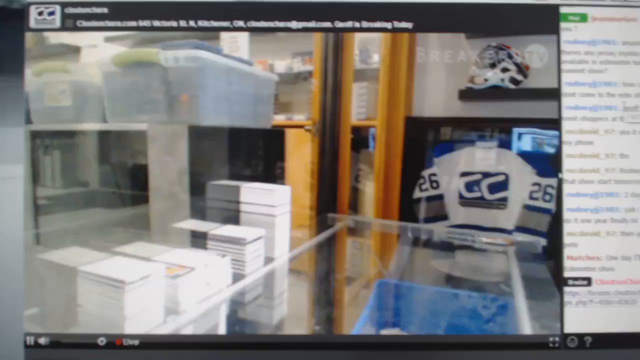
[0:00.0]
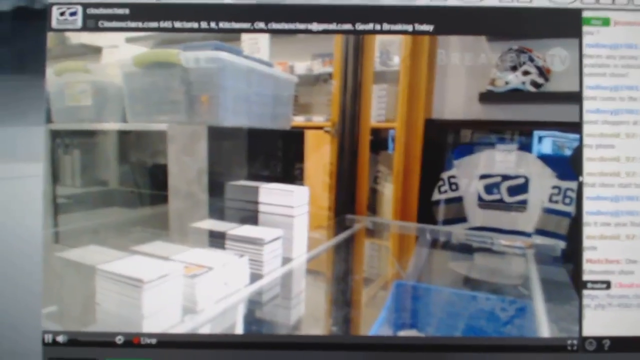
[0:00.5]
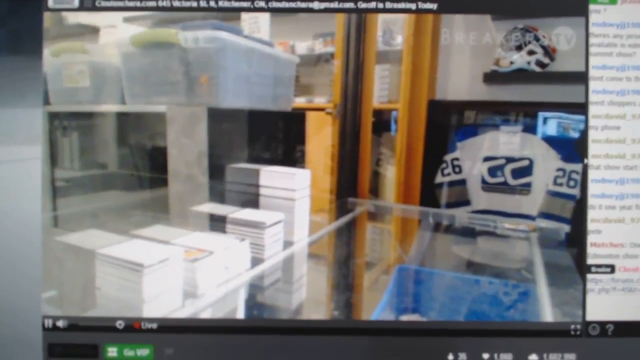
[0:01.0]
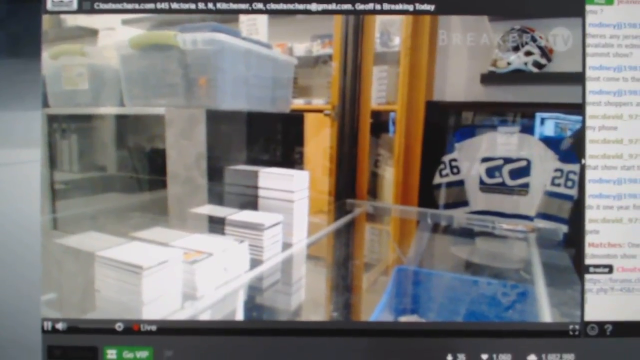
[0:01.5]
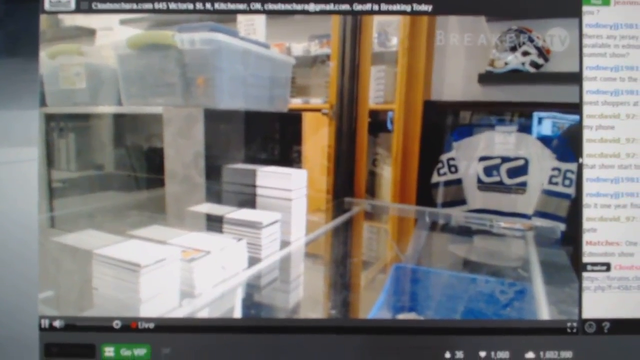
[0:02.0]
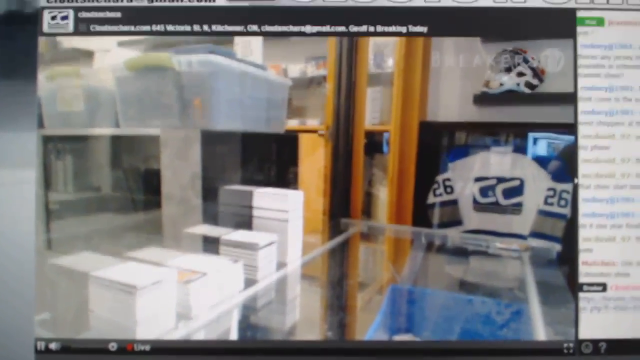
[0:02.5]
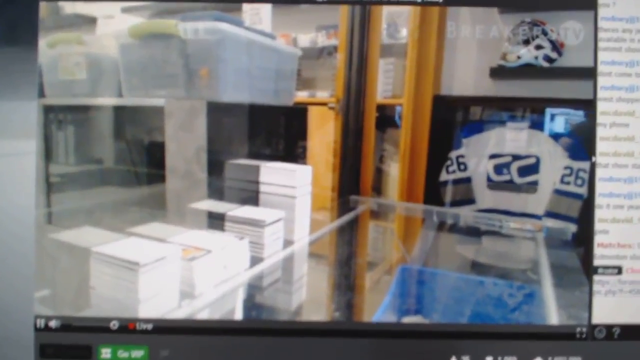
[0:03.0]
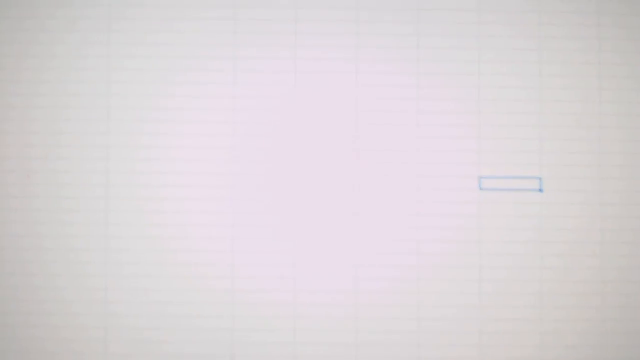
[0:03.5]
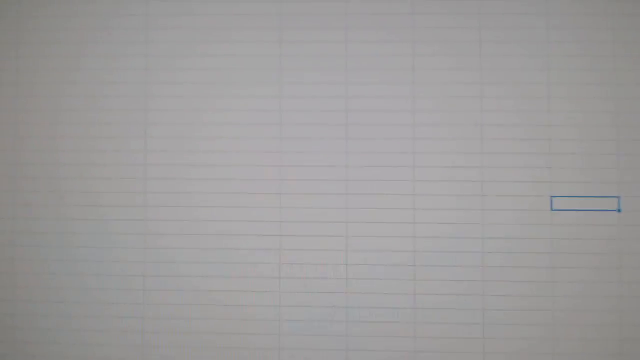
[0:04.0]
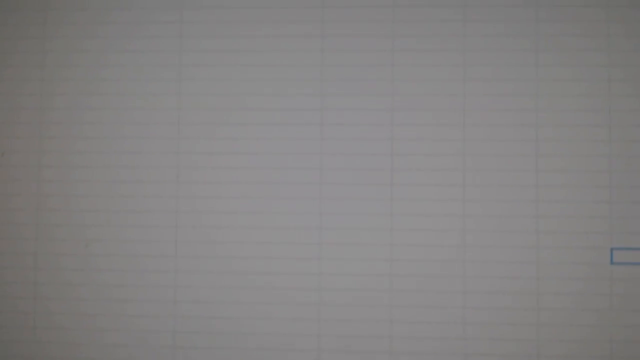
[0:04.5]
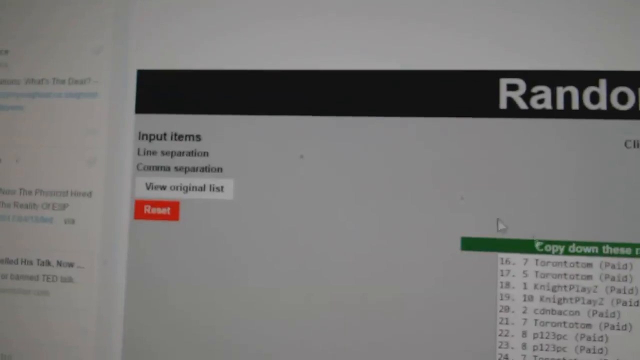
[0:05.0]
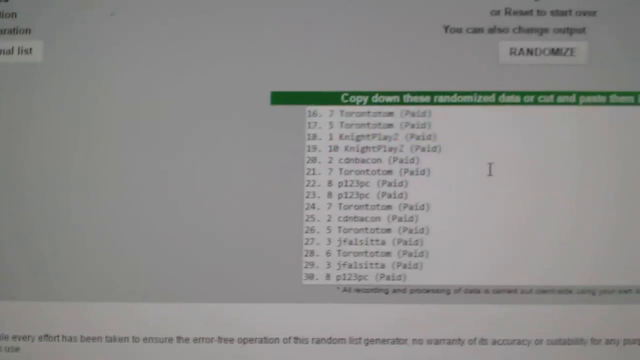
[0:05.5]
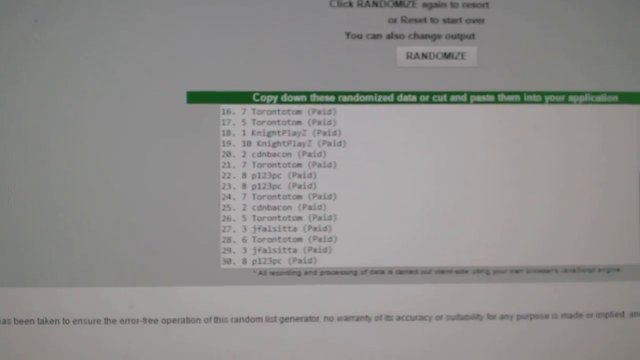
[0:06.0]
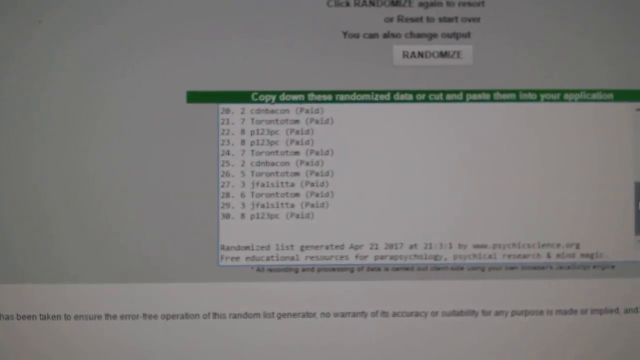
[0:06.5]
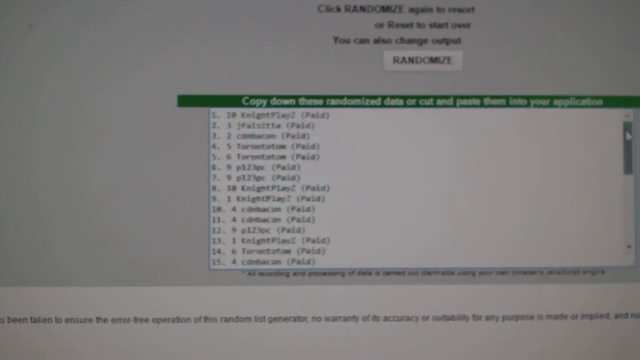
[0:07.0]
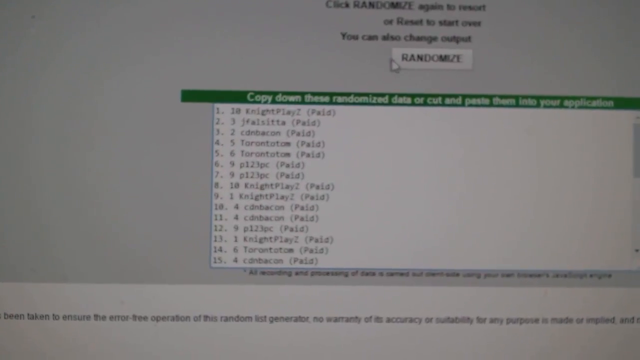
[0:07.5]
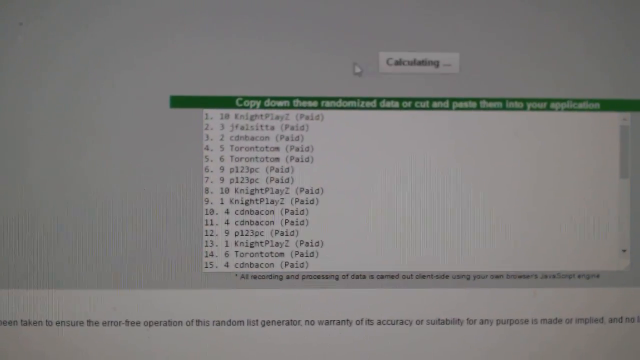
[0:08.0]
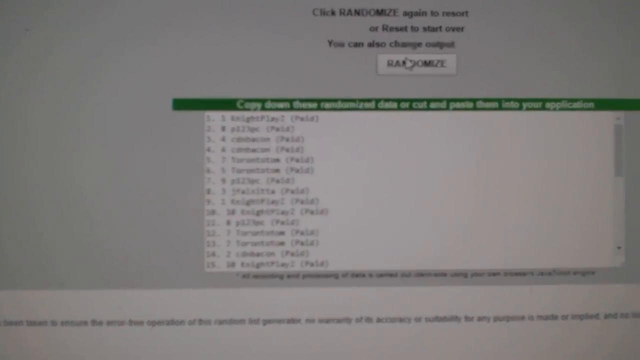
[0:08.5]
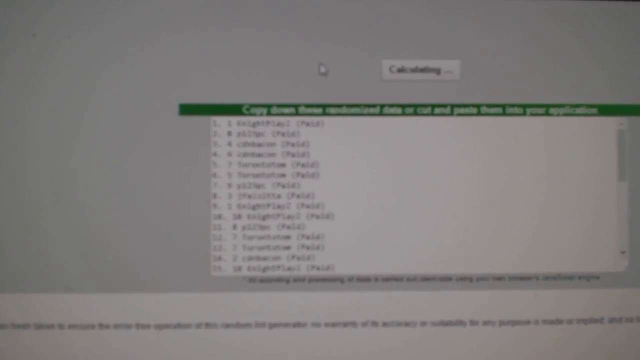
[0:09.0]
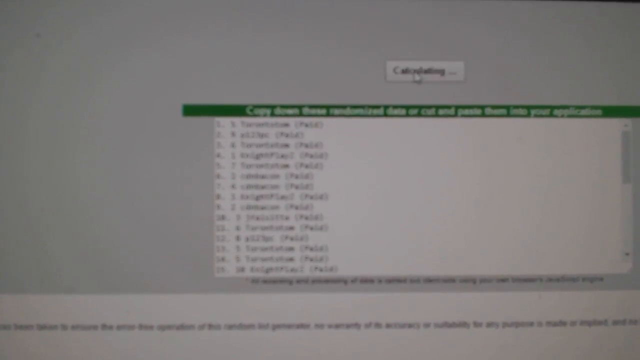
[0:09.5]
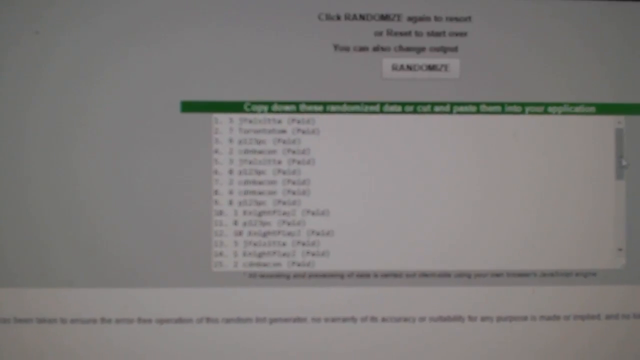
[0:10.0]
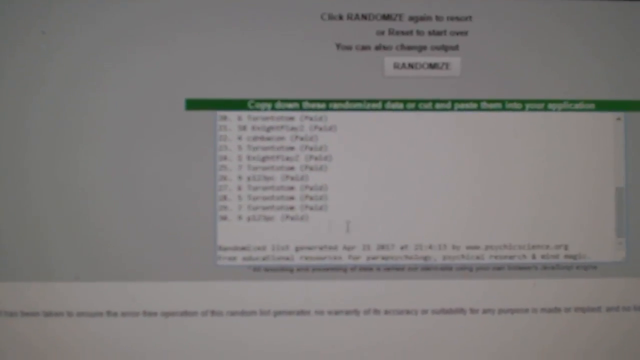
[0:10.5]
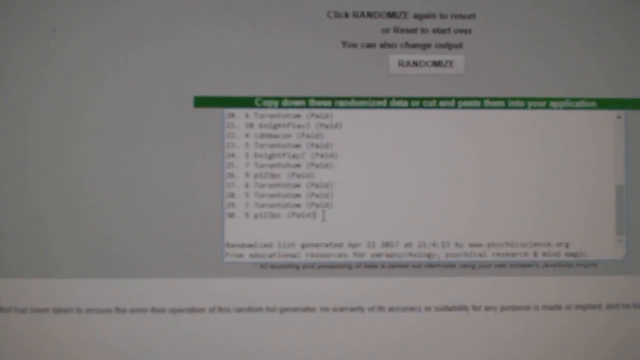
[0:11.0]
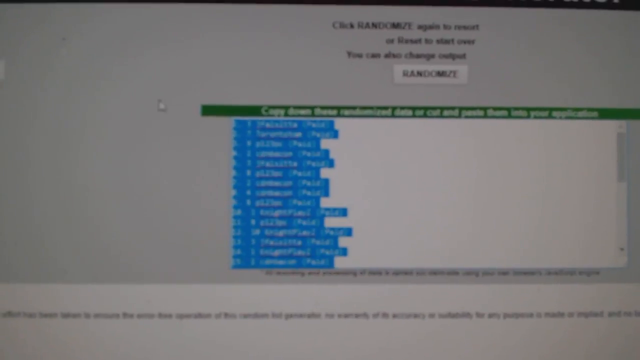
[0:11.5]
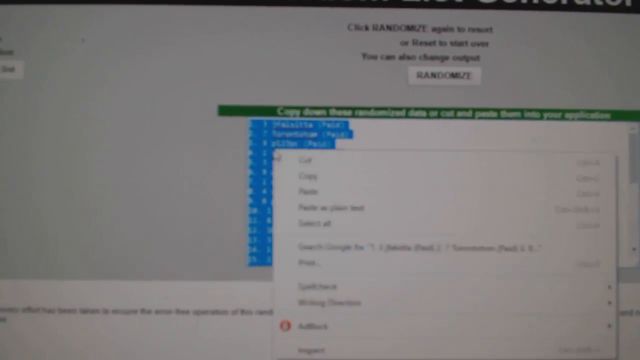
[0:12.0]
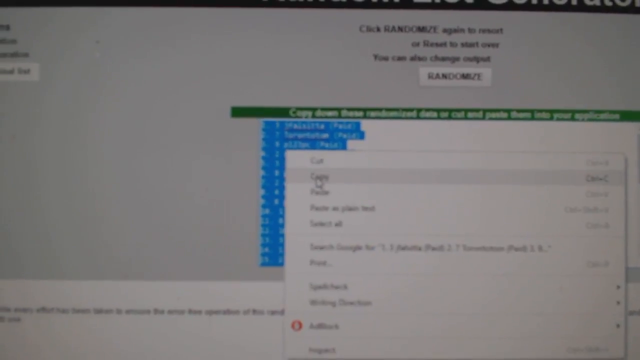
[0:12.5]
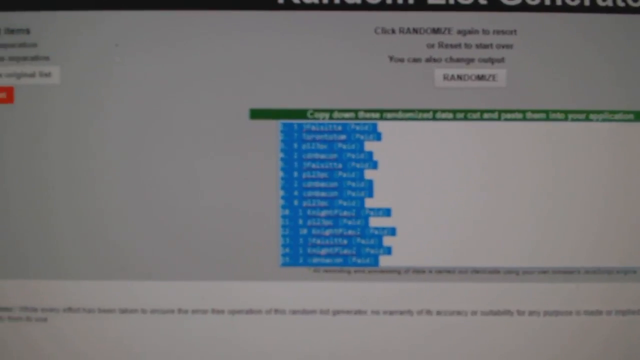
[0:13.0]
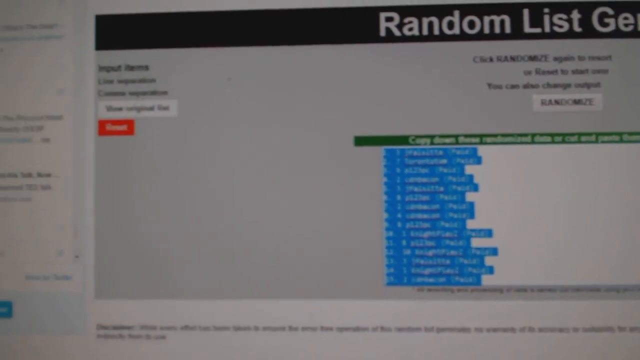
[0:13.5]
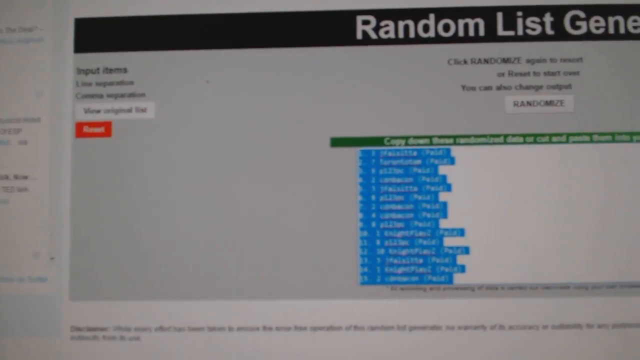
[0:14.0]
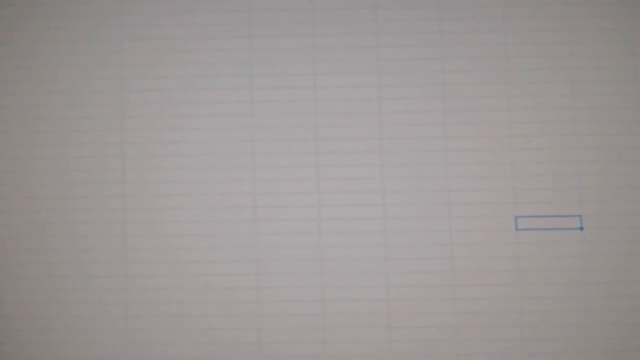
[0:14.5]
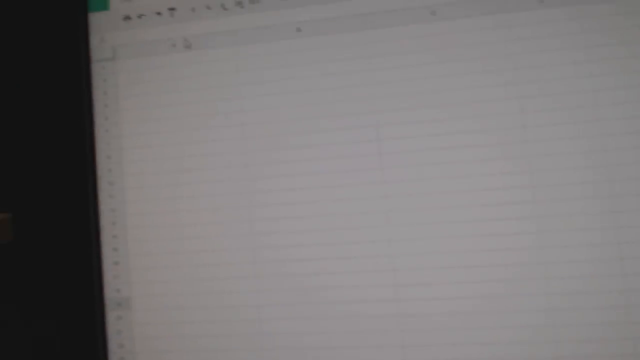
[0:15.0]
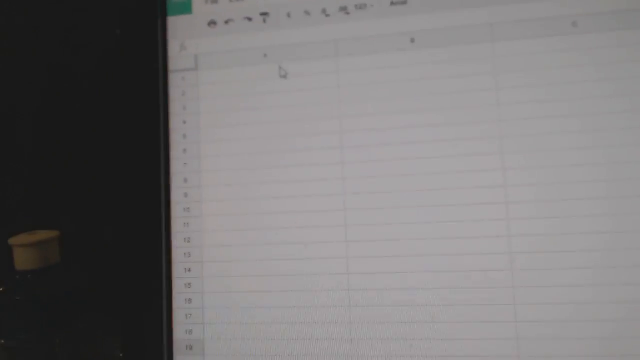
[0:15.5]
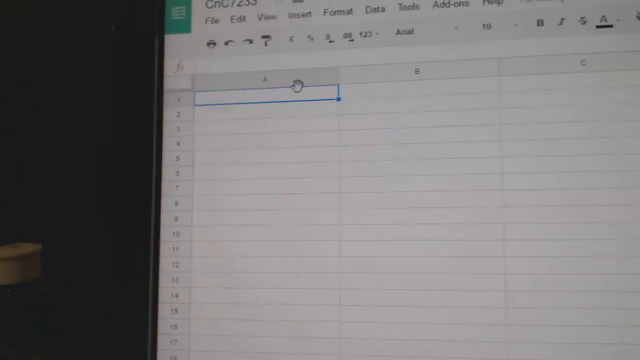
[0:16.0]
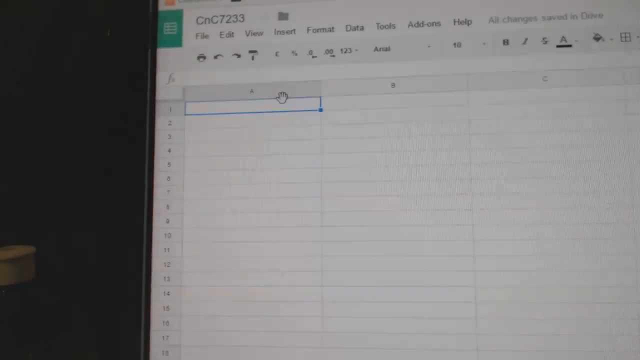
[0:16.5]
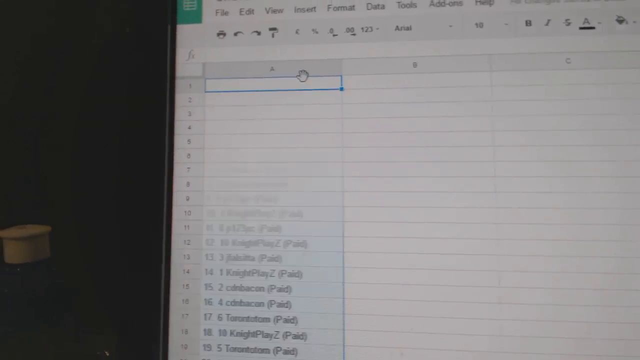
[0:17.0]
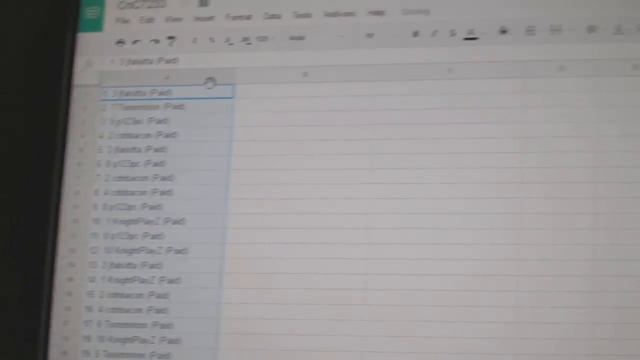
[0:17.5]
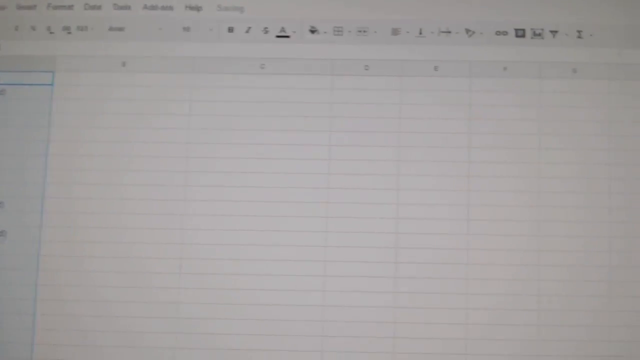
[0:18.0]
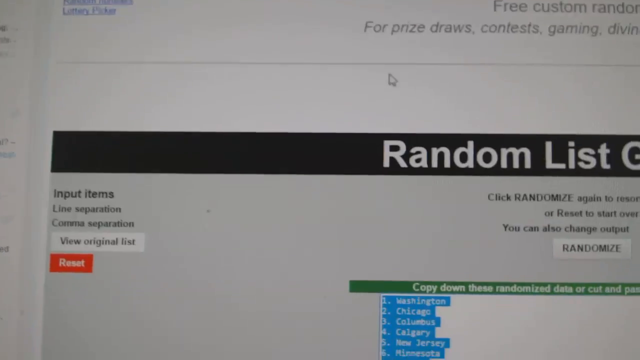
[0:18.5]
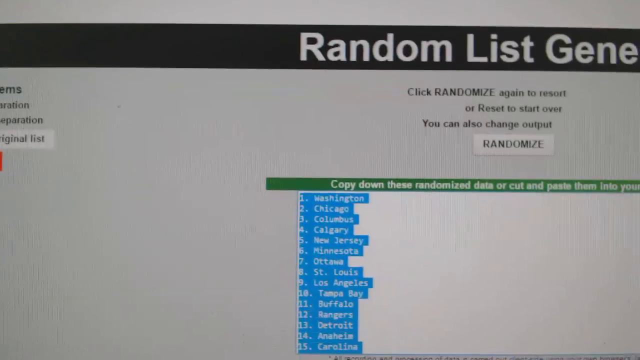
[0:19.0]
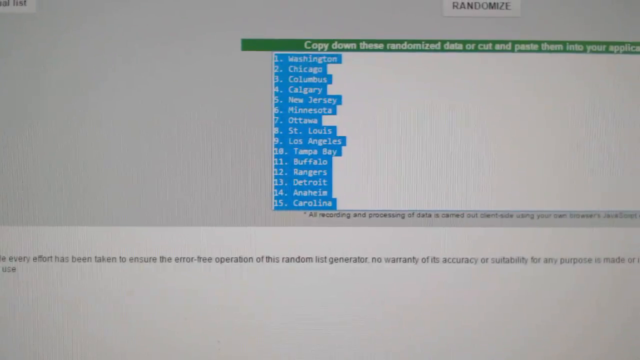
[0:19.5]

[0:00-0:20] Someone appears to be filming the back of a room. There are a couple of different clear tubs with a green handle on what looks like a top shelf, and there is also a glass display. The items seem to be memorabilia: there is a jersey, apparently a hockey jersey, and a hockey helmet, and a Phillies helmet above on a floating shelf. The camera shakes up and down for a moment and pans around to a list that is numbered on the left side and contains a bunch of random words, one apparently reading "paid." Above it is a green box with text beginning "copy," and the page scrolls up. He clicks "randomize" a couple of times, and it says "calculating" and highlights. The image is dark, blurry and shaky, making it hard to tell what is going on. He then goes to an Excel spreadsheet, clicks the first cell, and copies and pastes the information from the website, apparently copying and pasting each of the lists into the spreadsheet.